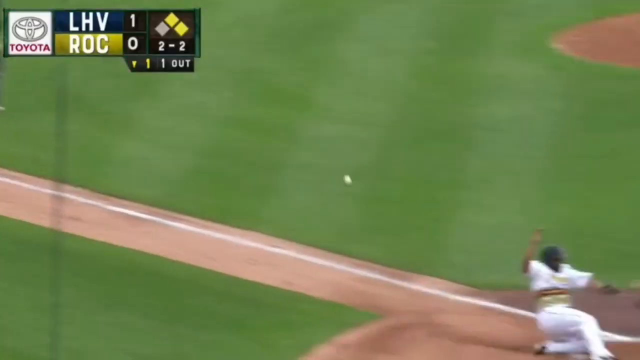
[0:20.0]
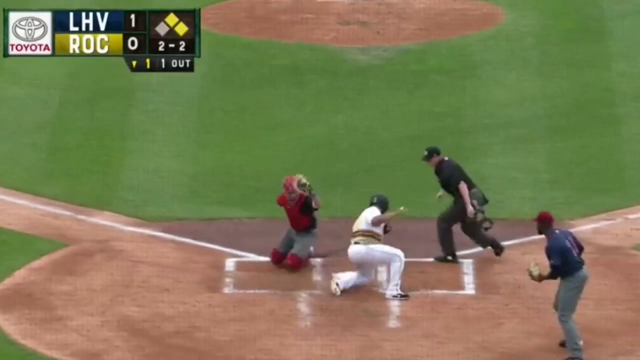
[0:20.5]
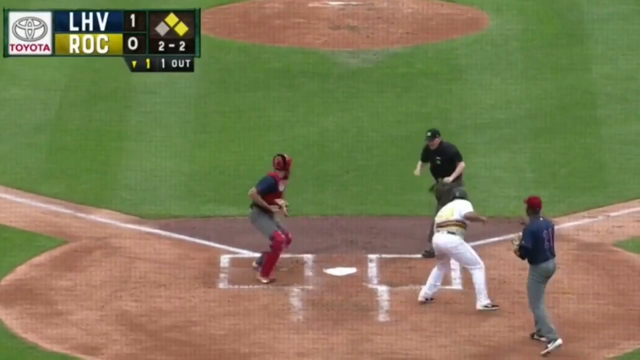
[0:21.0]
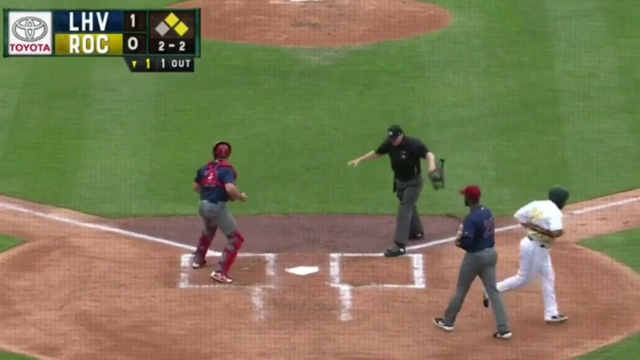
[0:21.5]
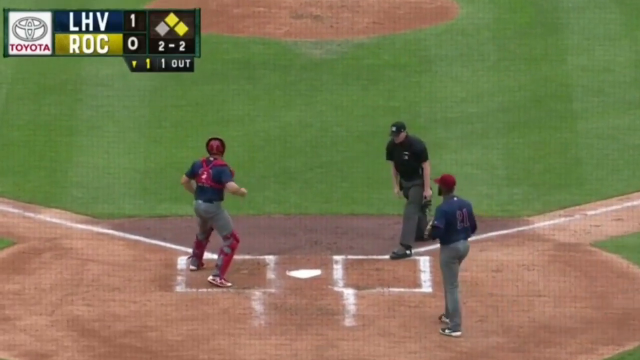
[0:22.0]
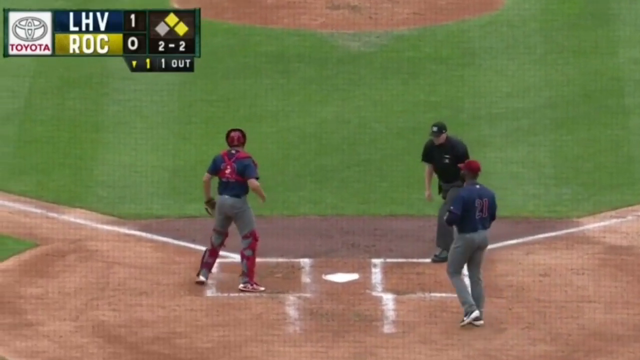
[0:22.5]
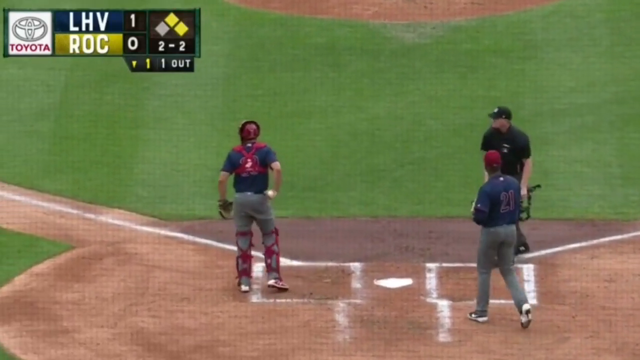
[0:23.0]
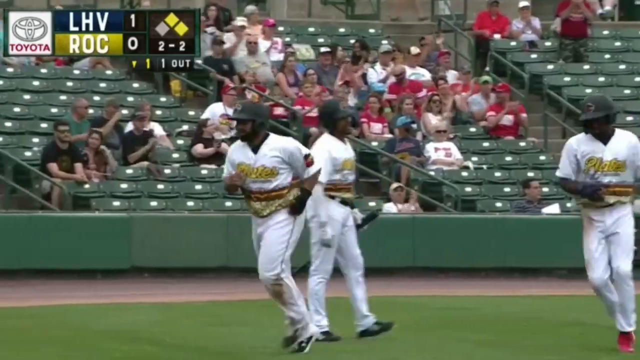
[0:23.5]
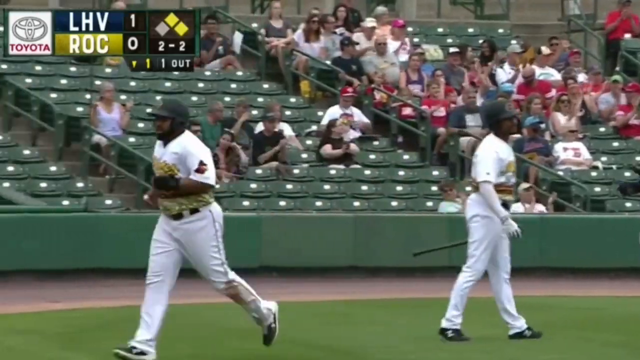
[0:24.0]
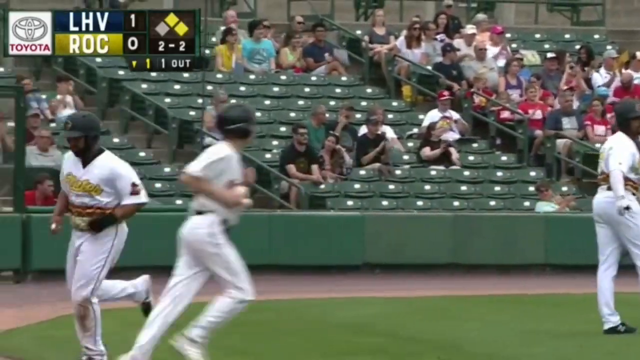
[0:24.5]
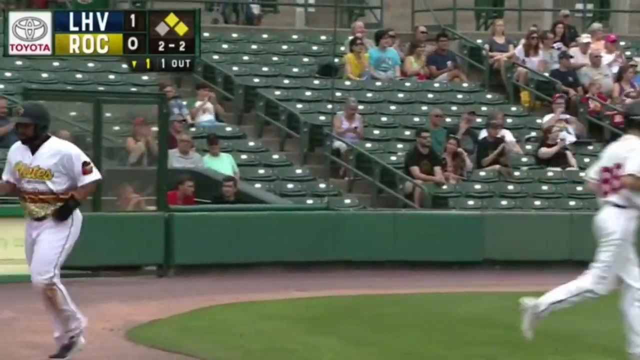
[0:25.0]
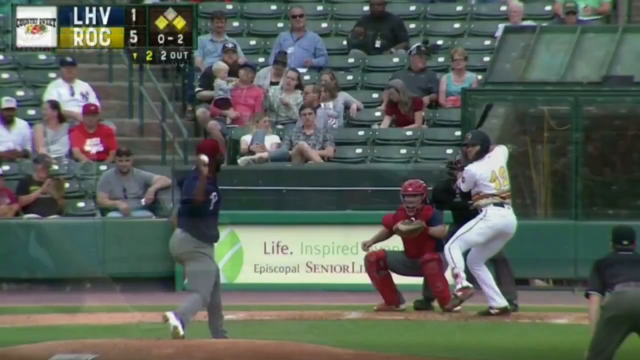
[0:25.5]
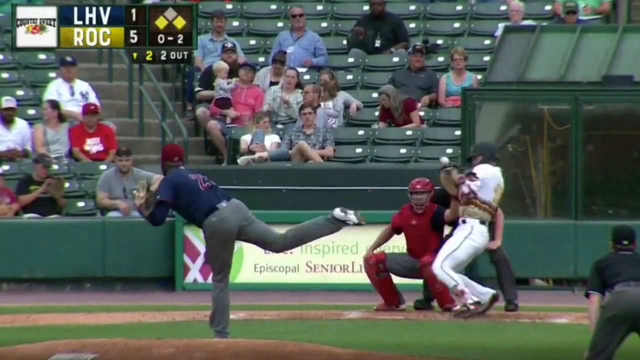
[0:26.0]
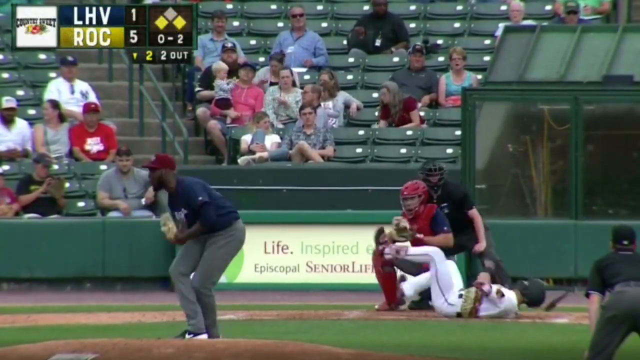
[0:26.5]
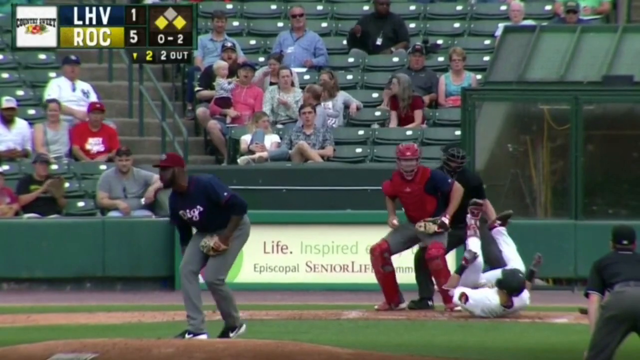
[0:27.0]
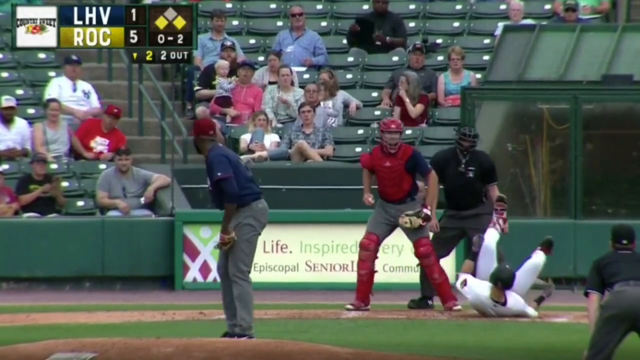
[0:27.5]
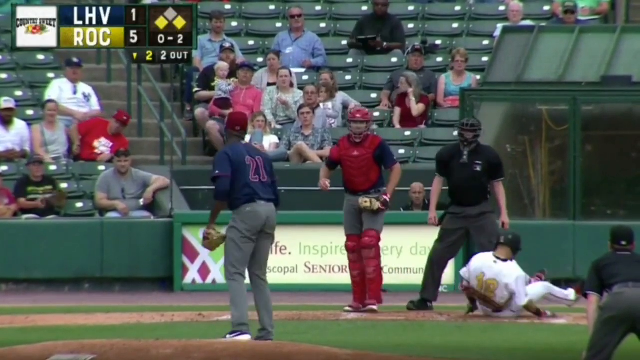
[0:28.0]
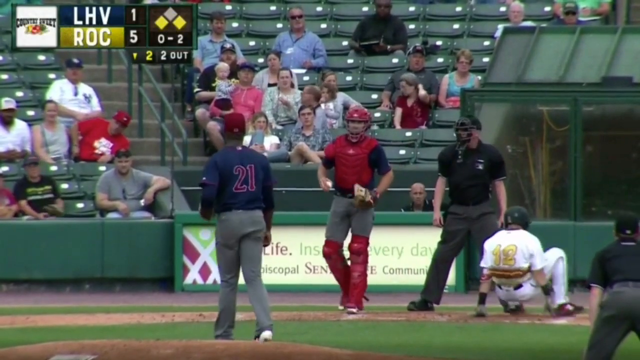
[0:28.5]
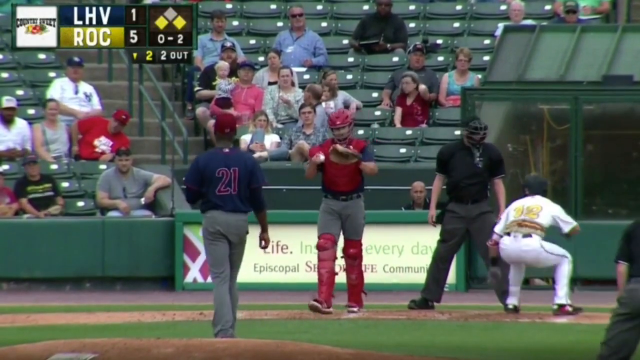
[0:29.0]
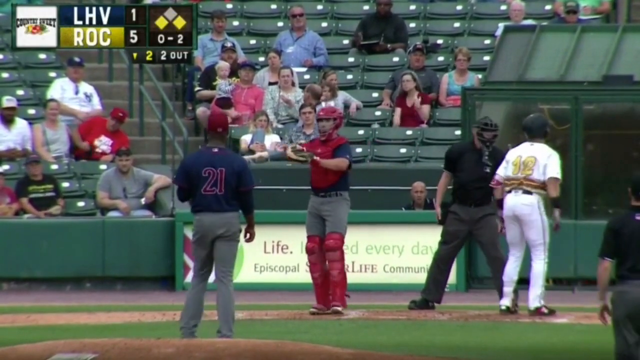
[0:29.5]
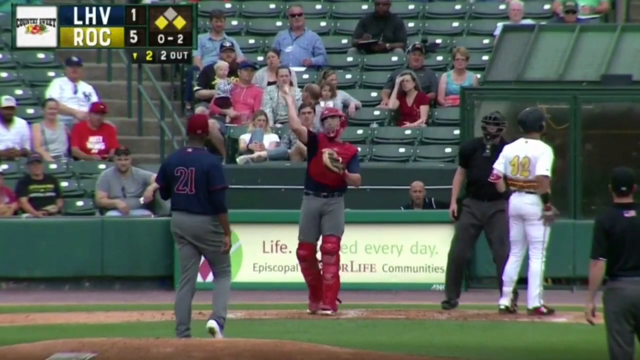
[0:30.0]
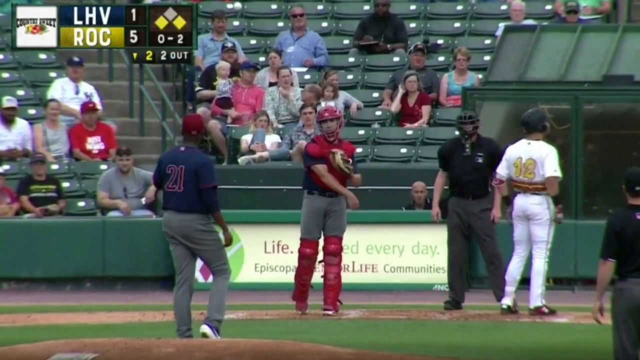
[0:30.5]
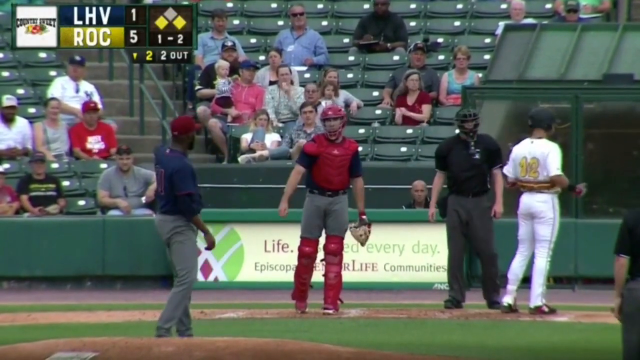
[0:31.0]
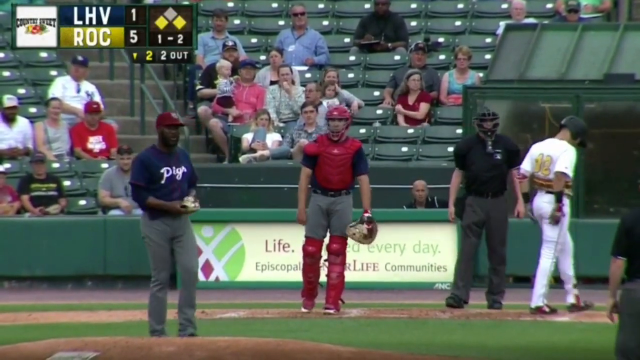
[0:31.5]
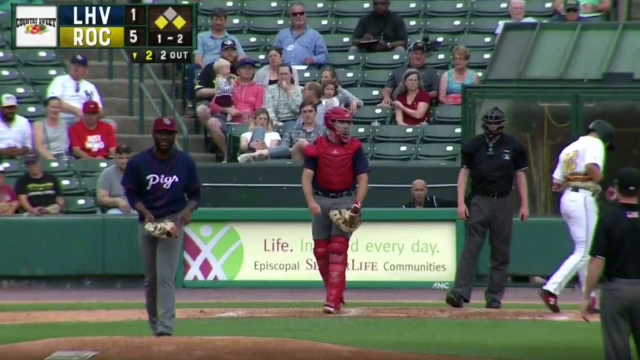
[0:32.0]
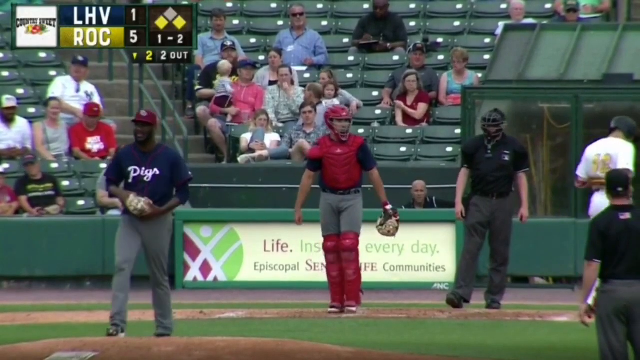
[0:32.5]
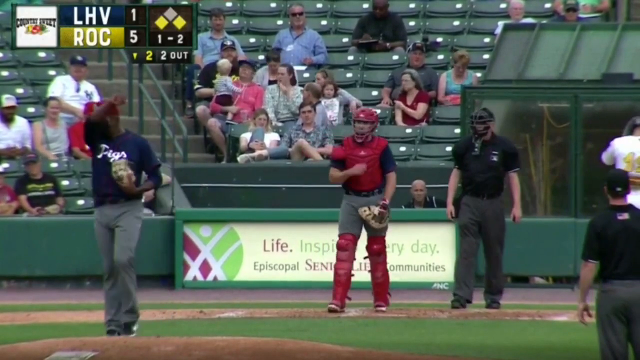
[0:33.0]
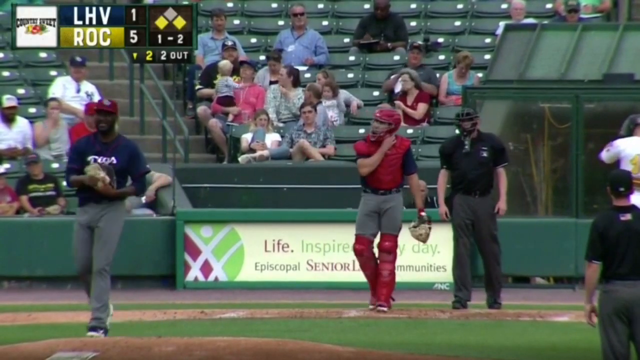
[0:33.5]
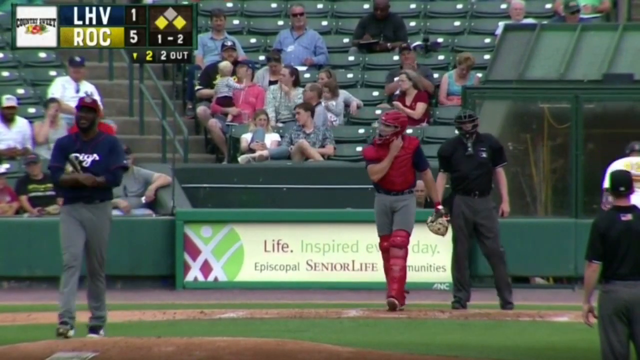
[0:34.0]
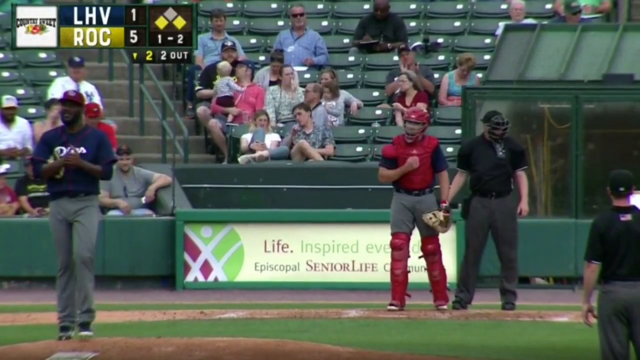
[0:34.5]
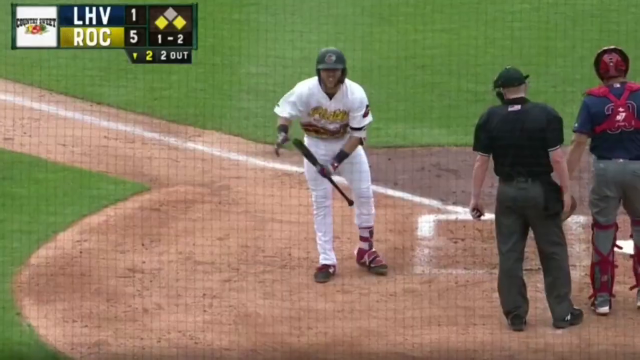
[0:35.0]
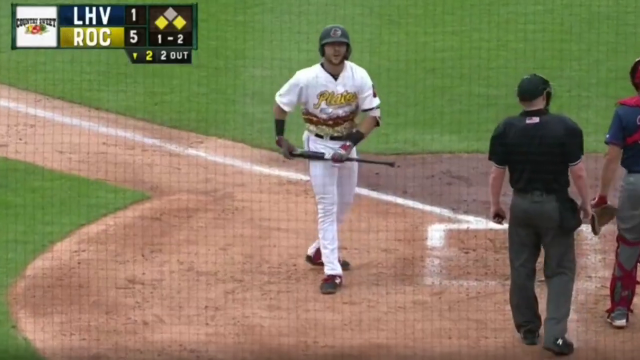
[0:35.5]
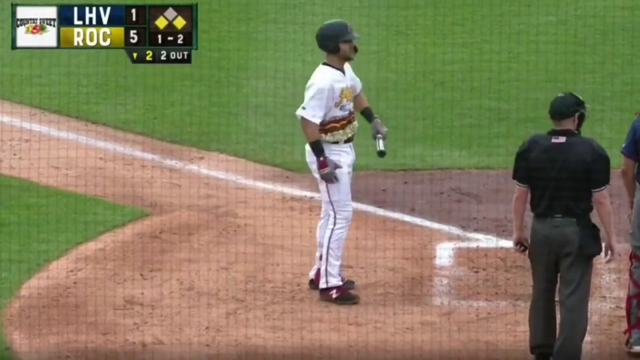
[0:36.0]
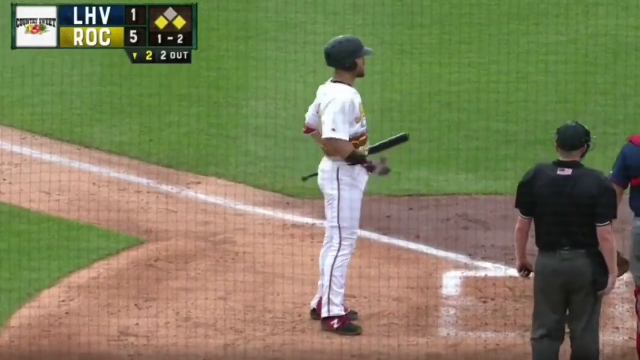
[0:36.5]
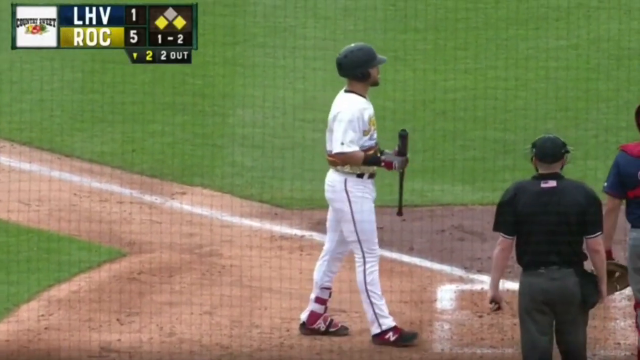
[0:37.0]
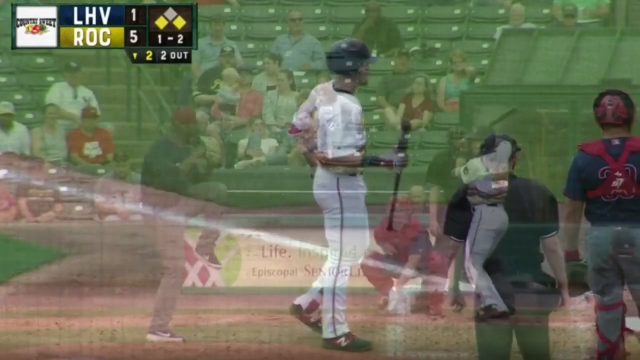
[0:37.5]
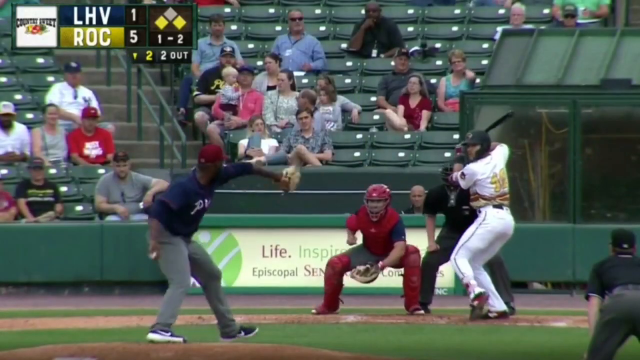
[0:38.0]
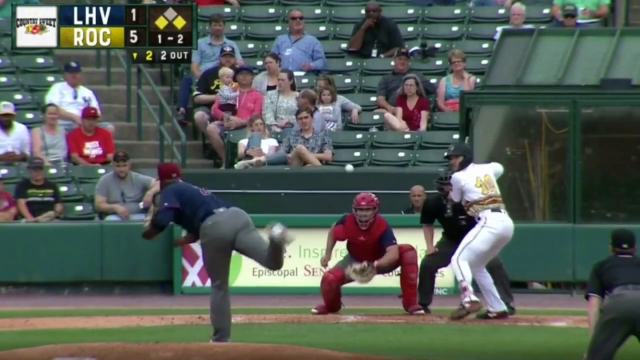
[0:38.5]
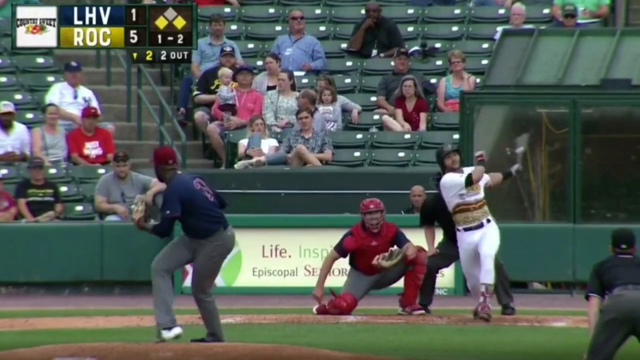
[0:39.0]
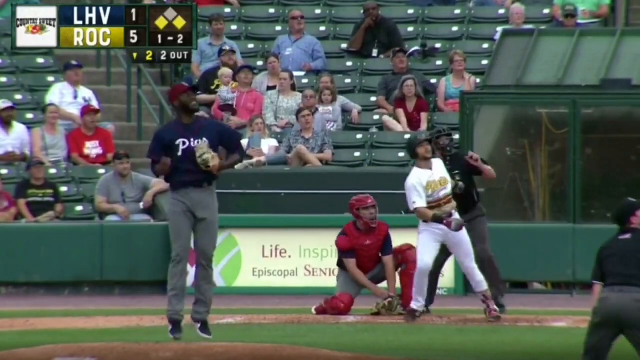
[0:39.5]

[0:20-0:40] A baseball game is underway. Many of the seats in the background are empty, while a number of women fill some of the seats. The scoreboard in the top left section of the screen shows LHV versus ROC at 1-0, with LHV on a blue background and ROC on a yellow background. The ball travels through the scene against what appears to be a blurry background.